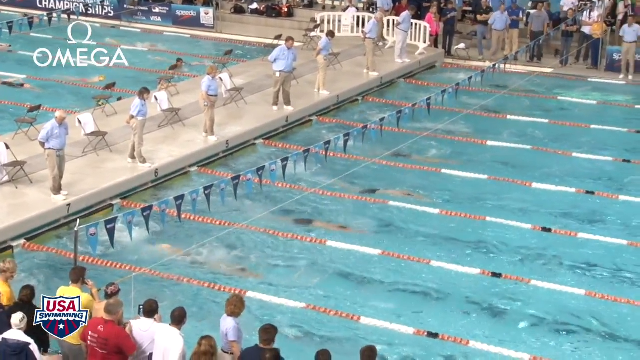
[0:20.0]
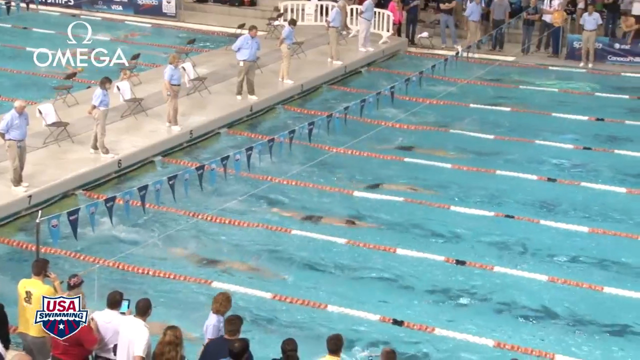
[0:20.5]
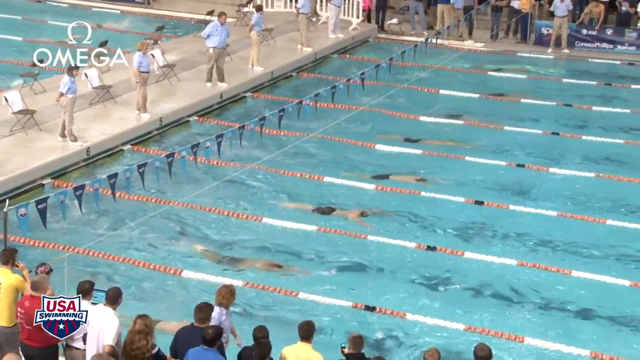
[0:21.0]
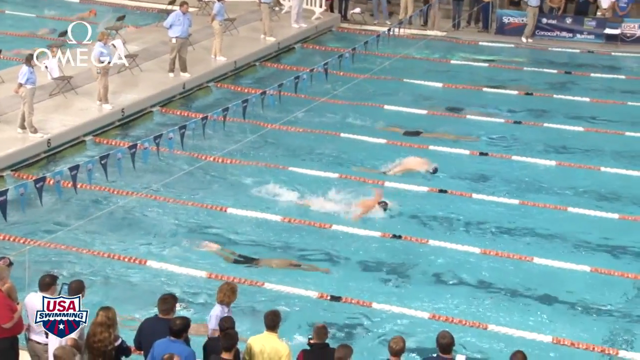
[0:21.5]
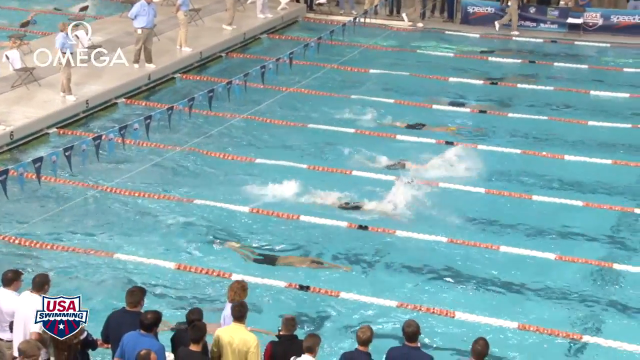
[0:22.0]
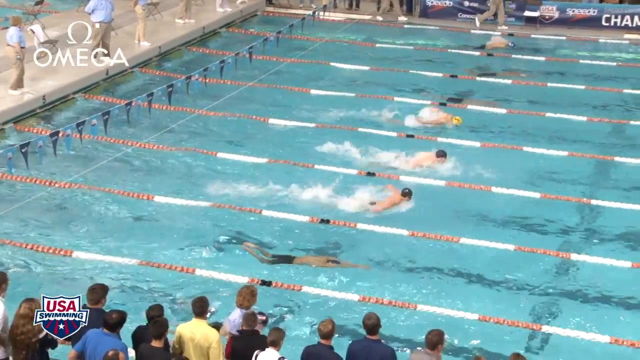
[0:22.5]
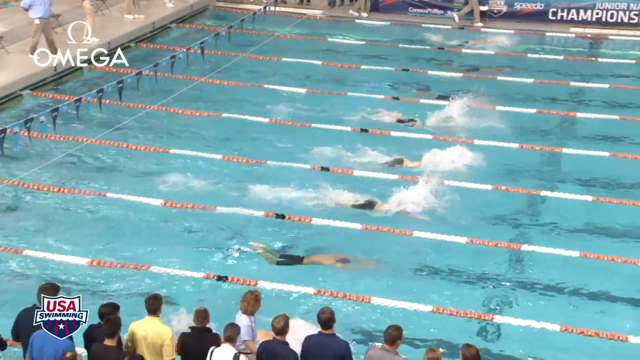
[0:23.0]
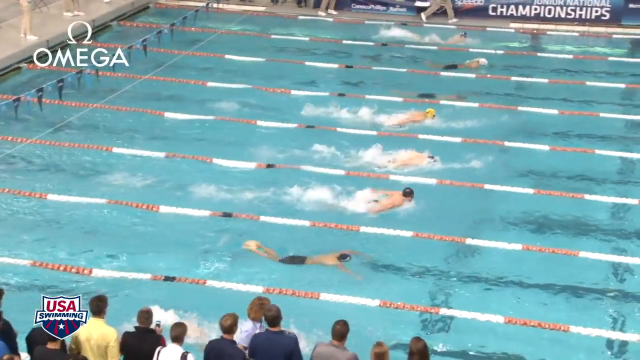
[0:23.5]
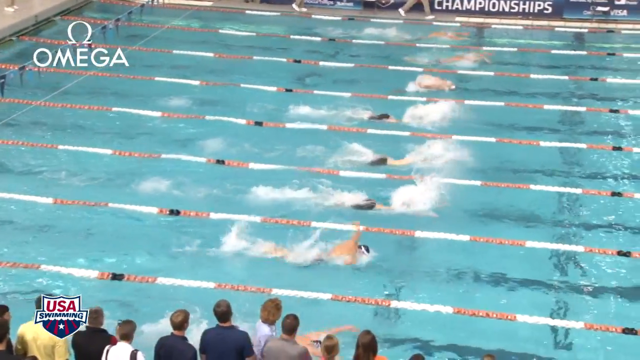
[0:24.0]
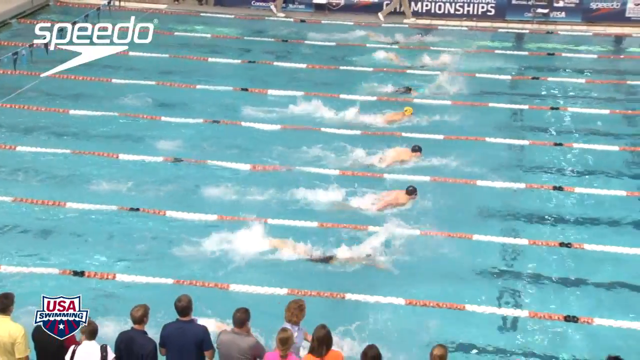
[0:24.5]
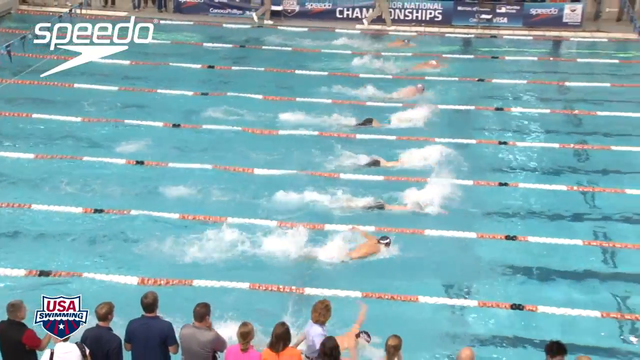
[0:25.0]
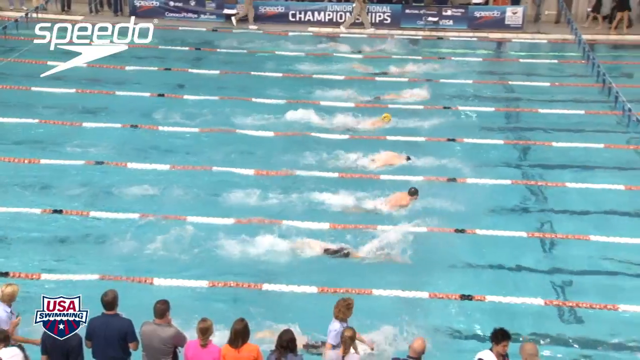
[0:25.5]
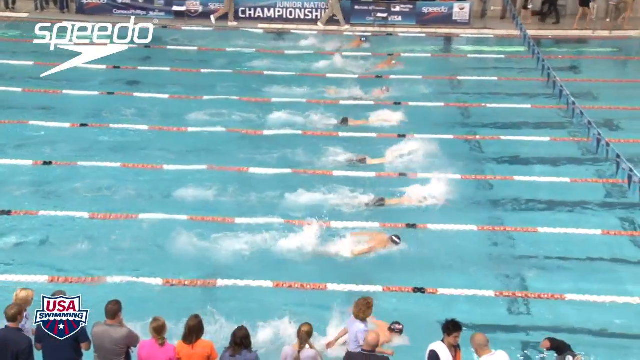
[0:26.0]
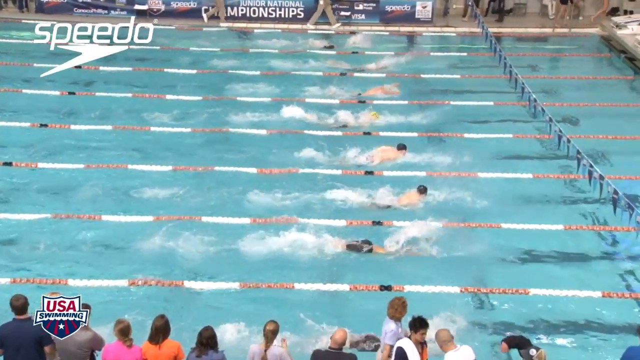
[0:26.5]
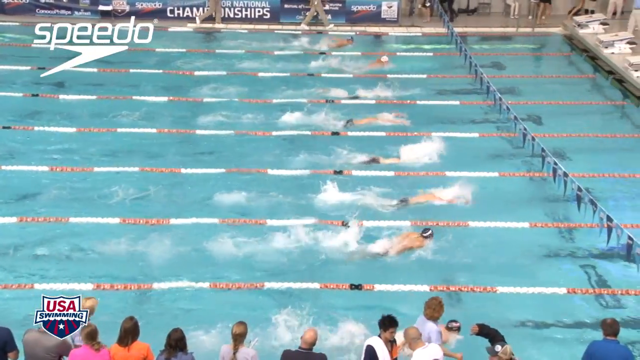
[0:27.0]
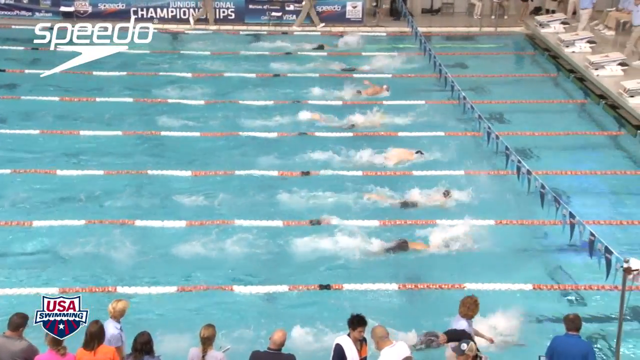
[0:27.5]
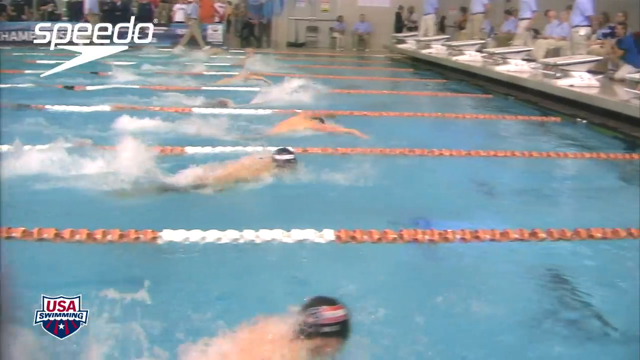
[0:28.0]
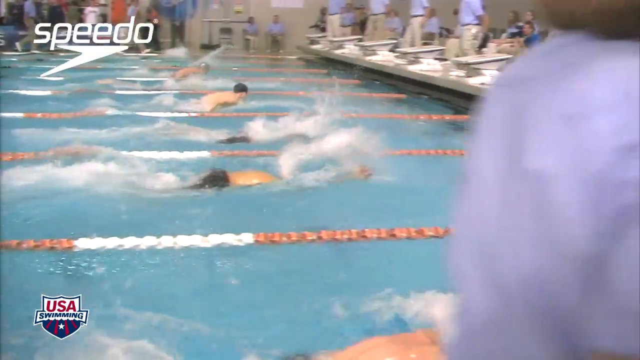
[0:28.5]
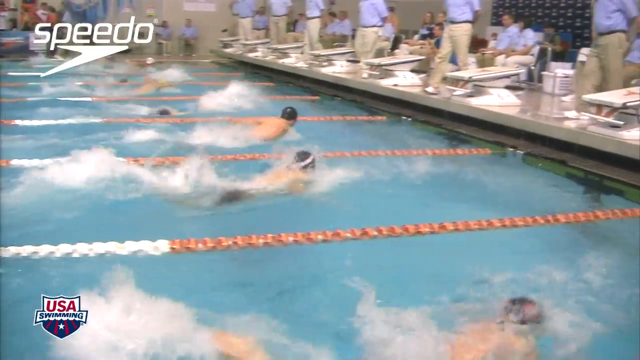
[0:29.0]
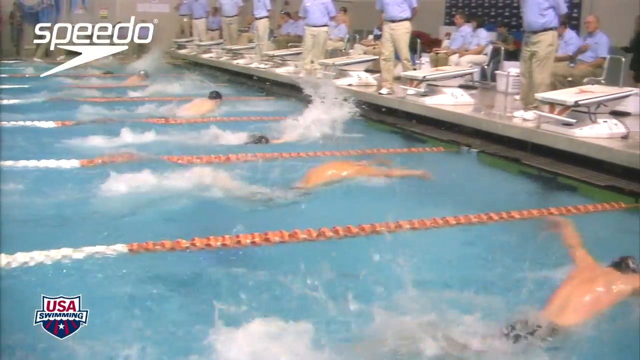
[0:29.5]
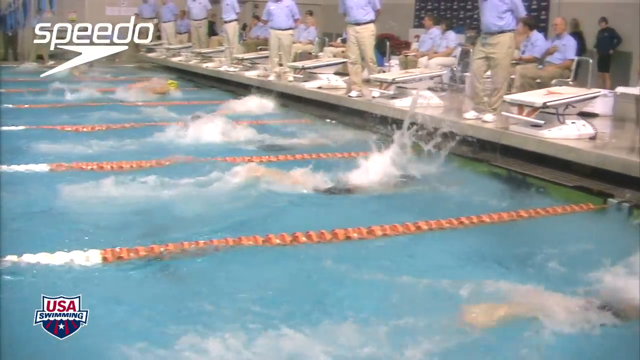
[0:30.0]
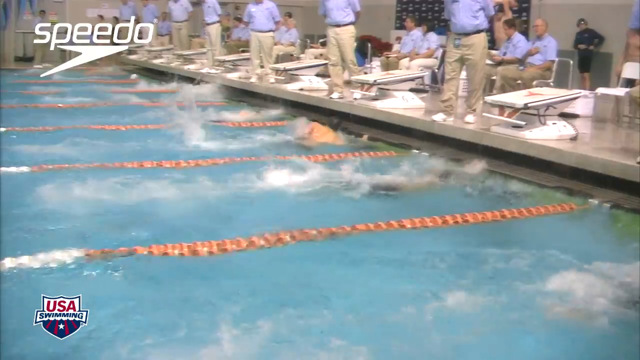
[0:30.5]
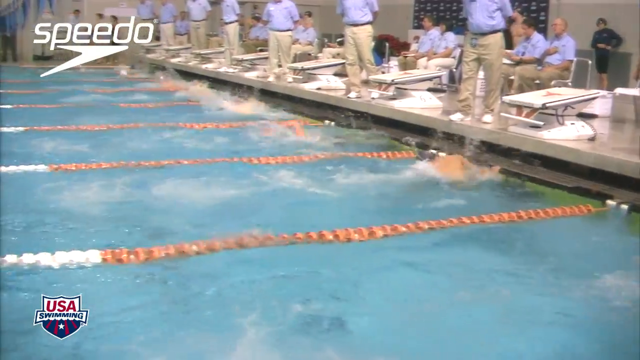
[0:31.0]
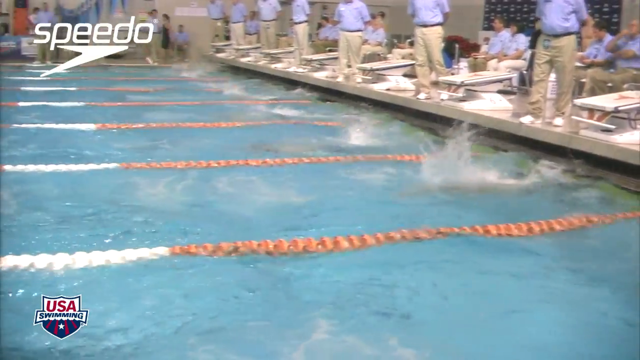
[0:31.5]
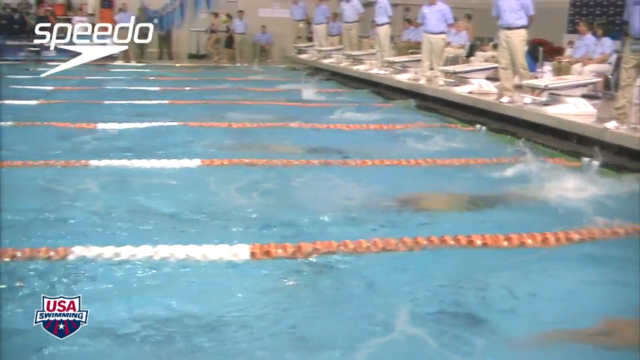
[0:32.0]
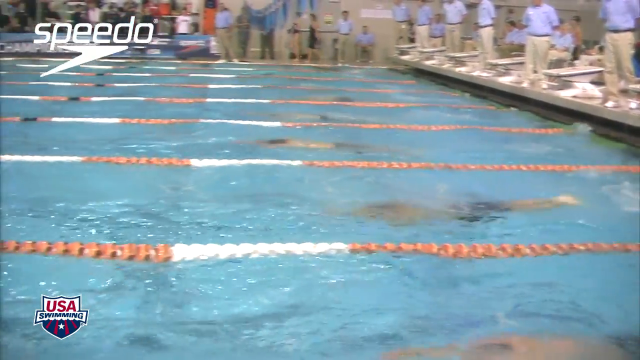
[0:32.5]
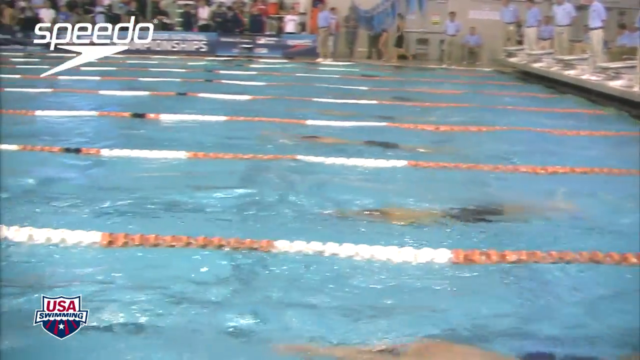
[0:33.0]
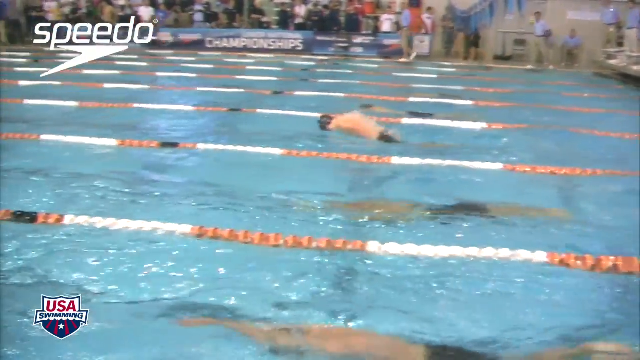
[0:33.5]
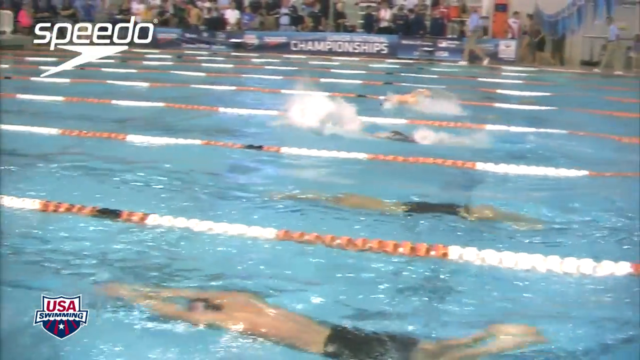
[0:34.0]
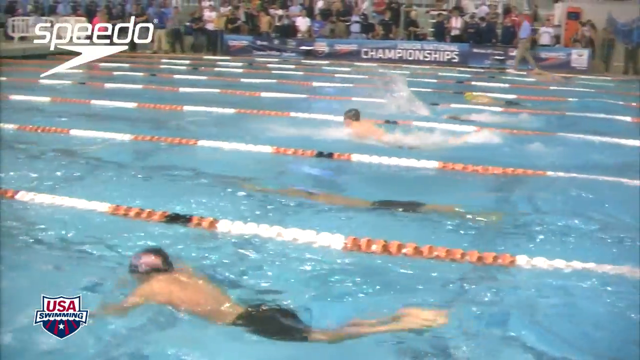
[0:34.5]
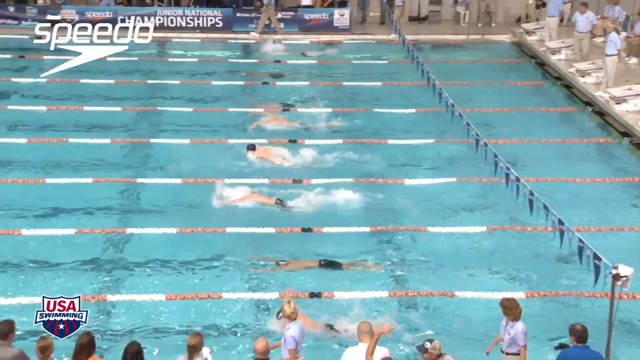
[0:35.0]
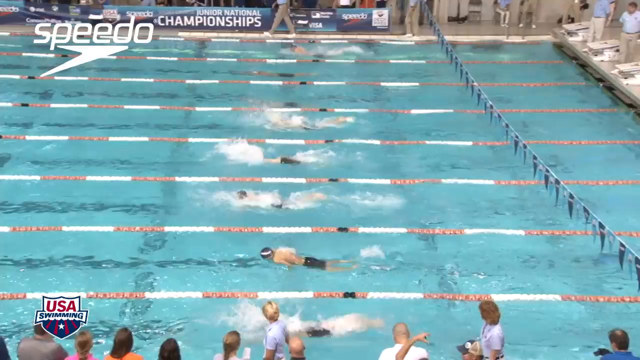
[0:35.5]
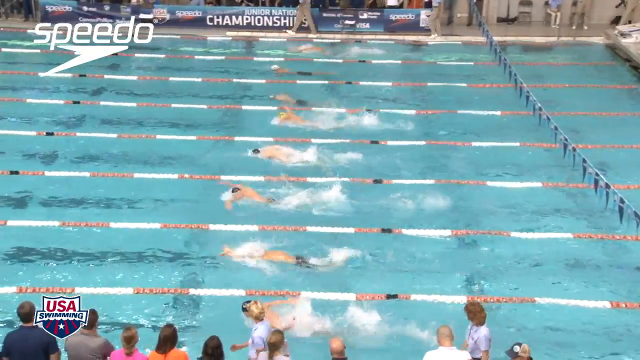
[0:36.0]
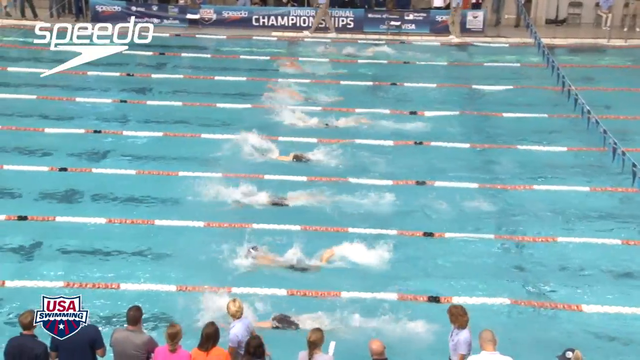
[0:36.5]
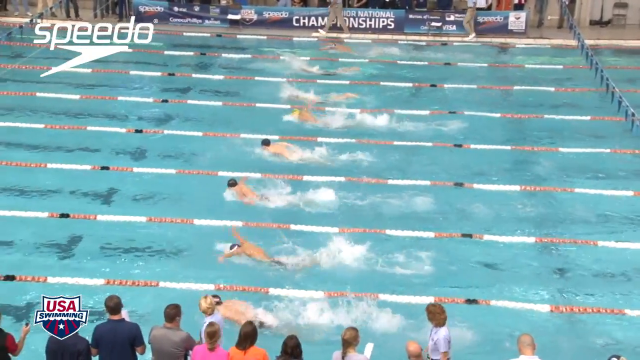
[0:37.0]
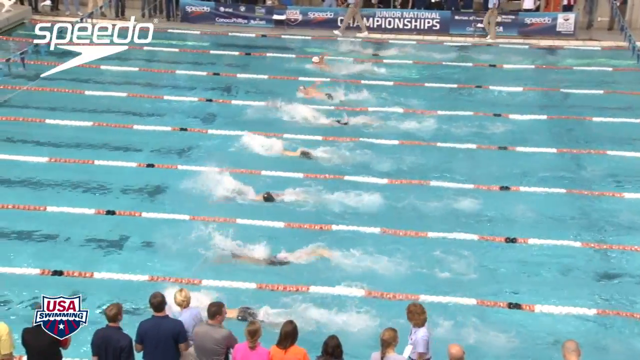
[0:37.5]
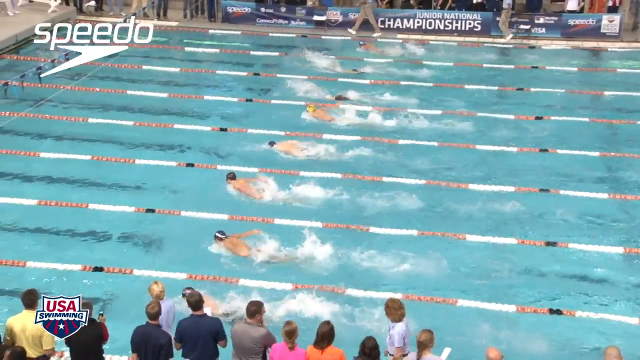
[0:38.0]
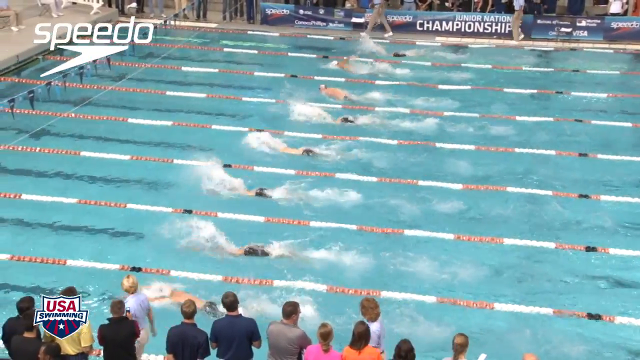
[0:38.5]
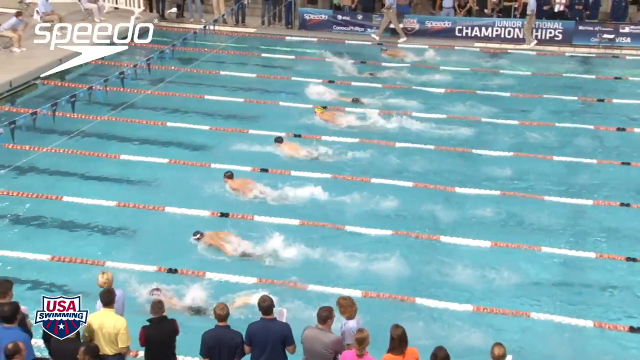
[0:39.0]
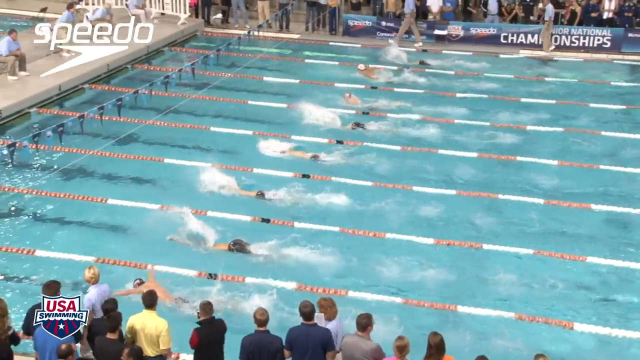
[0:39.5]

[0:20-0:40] The swimmers reach one end, where either judges or coaches, both male and female, are on the ledges leaning over; they seem to be just observing. There are chairs for them to sit in, and behind them is another pool that looks similar, with chairs lined up around it. The swimmers head back, making their laps, while a few people on the sideline follow them, possibly to make sure they are not cheating or are okay for safety reasons. The swimmers reach the end where they started and head back again. In the upper left corner the word "Speedo" appears with a little icon underneath it. Championships are mentioned on one of the tables, and a banner on the other side of the pool apparently reads "Junior National Championships".